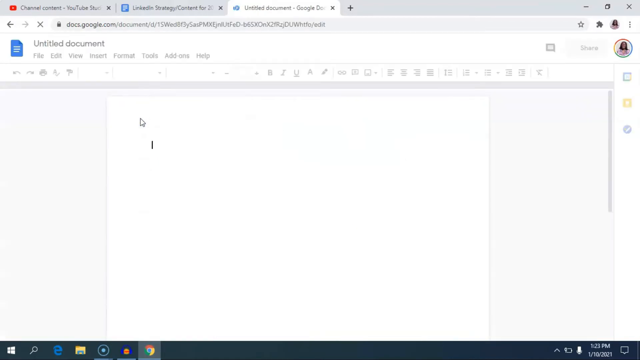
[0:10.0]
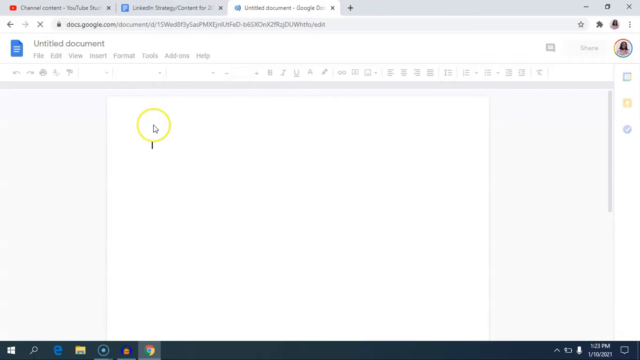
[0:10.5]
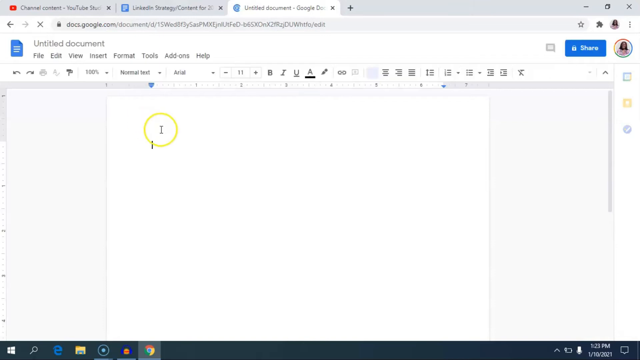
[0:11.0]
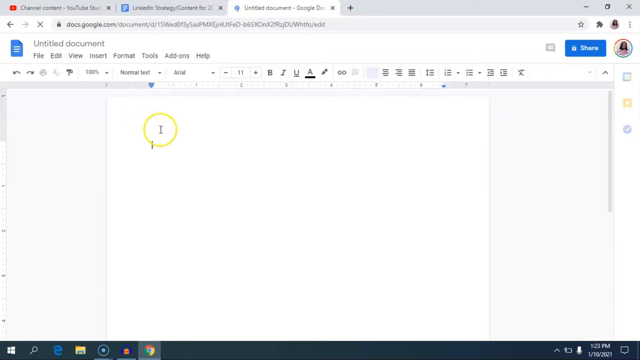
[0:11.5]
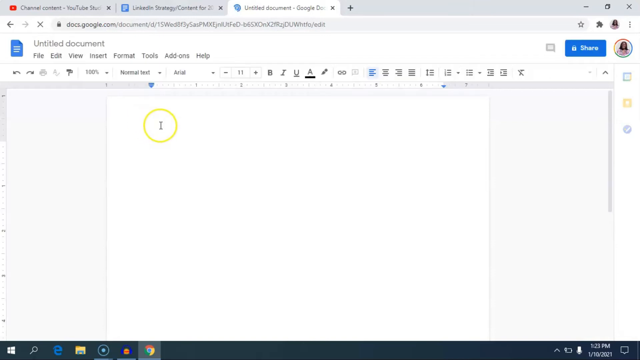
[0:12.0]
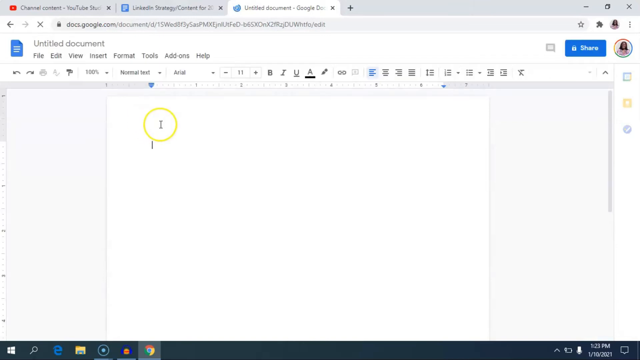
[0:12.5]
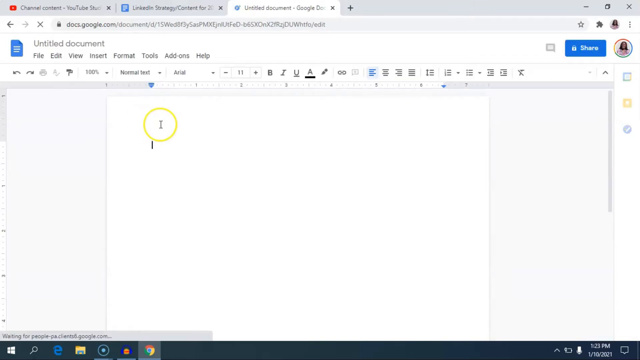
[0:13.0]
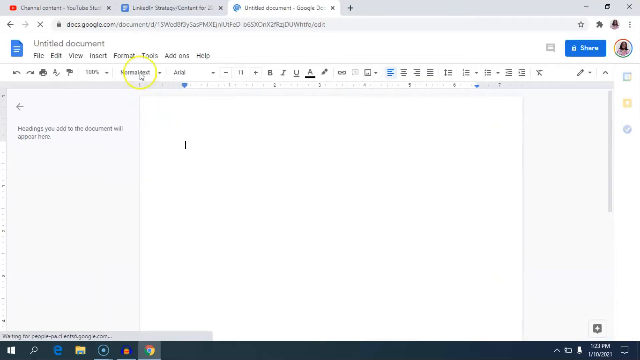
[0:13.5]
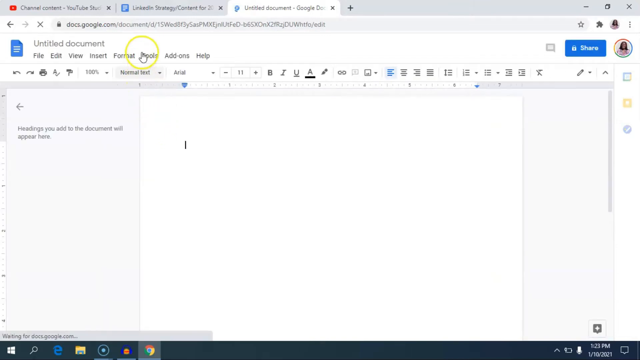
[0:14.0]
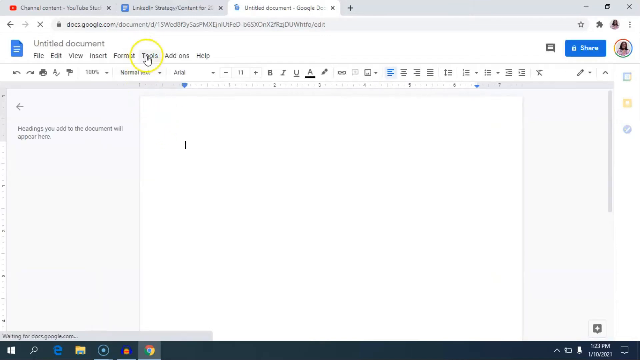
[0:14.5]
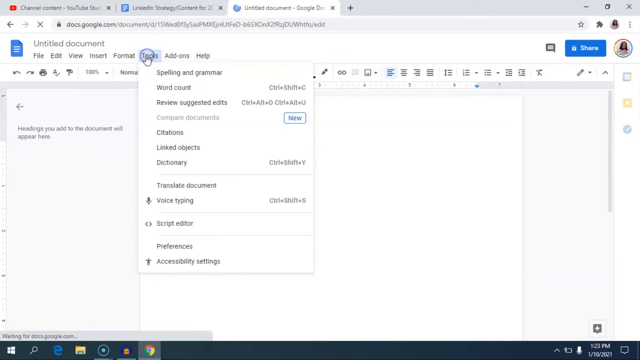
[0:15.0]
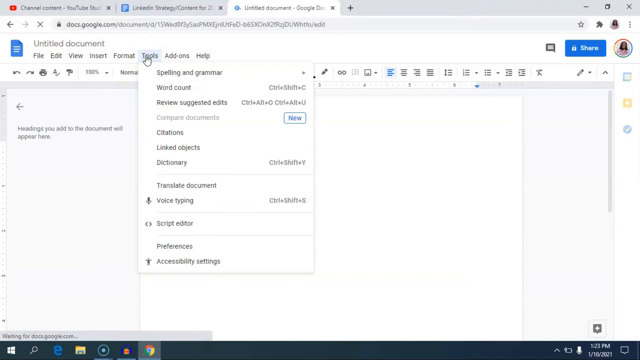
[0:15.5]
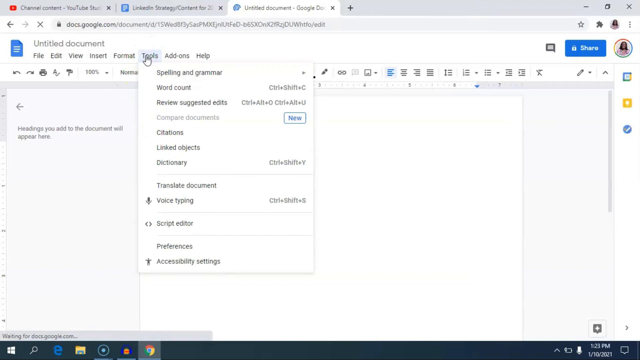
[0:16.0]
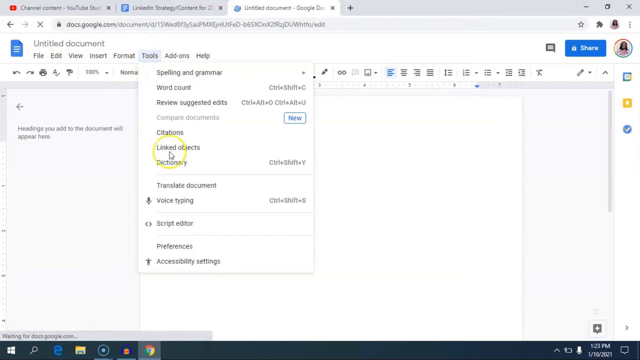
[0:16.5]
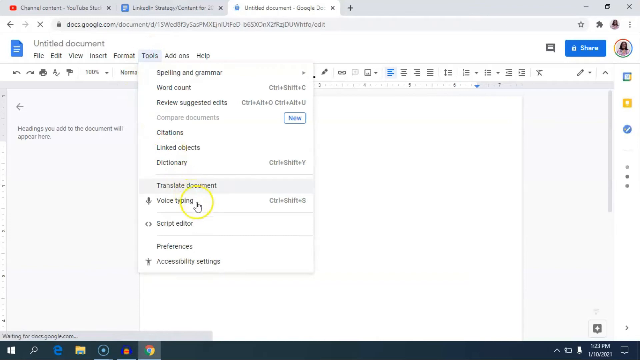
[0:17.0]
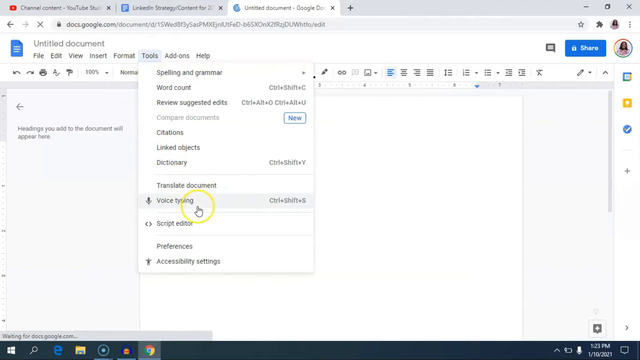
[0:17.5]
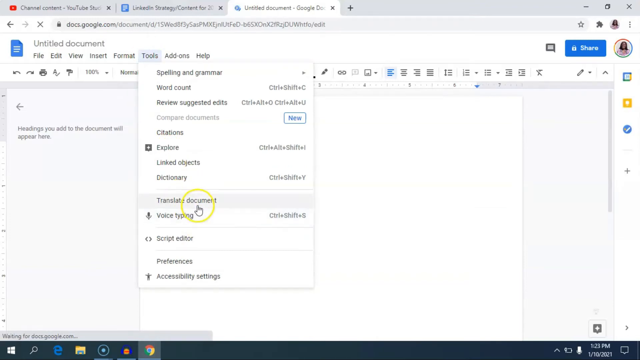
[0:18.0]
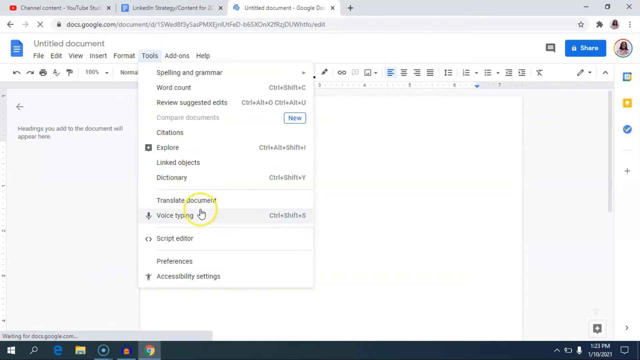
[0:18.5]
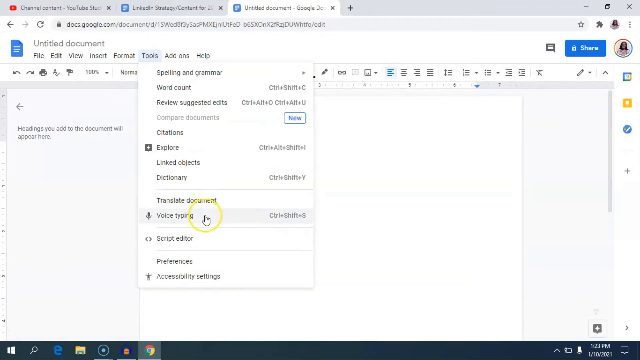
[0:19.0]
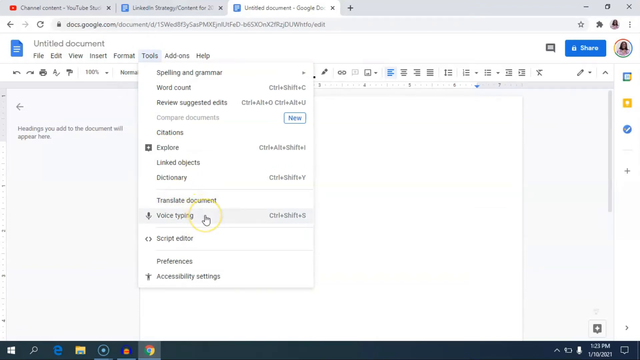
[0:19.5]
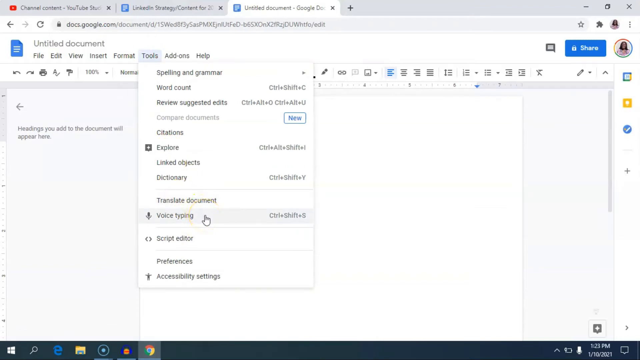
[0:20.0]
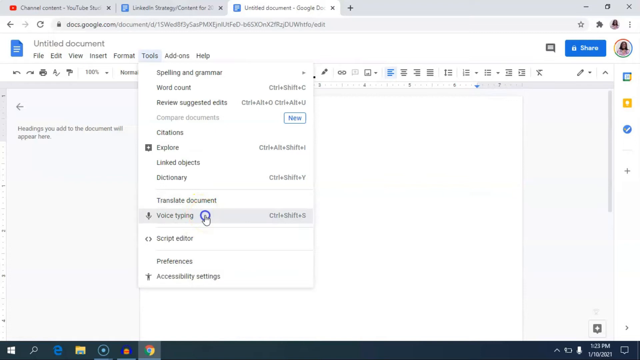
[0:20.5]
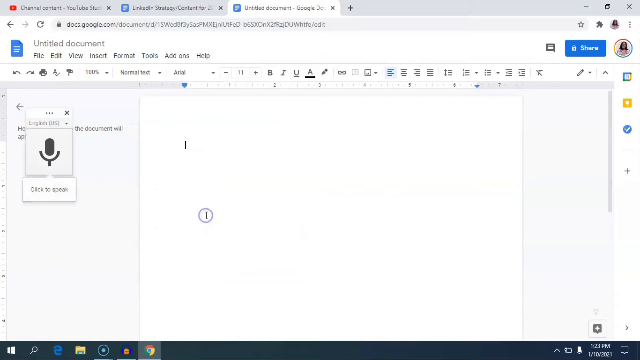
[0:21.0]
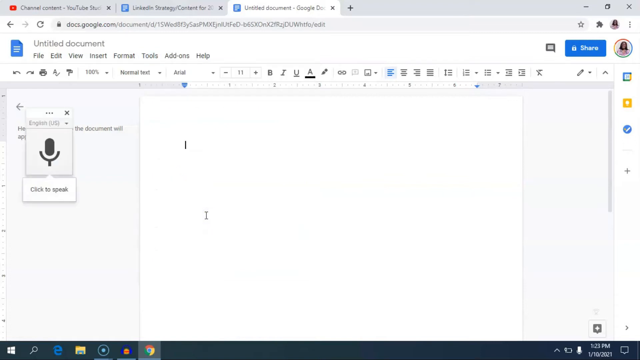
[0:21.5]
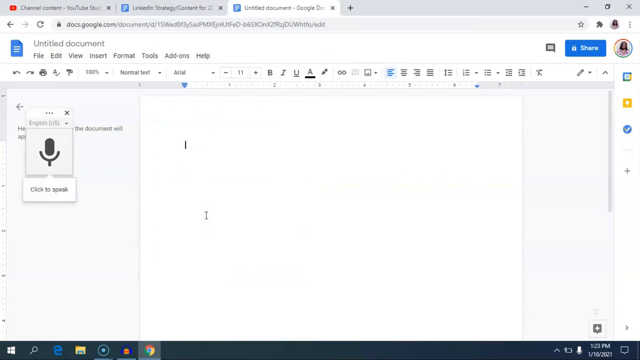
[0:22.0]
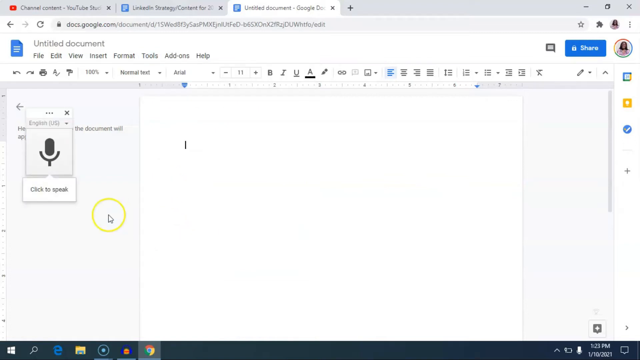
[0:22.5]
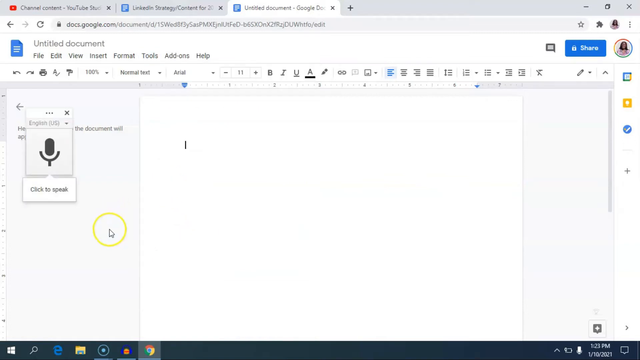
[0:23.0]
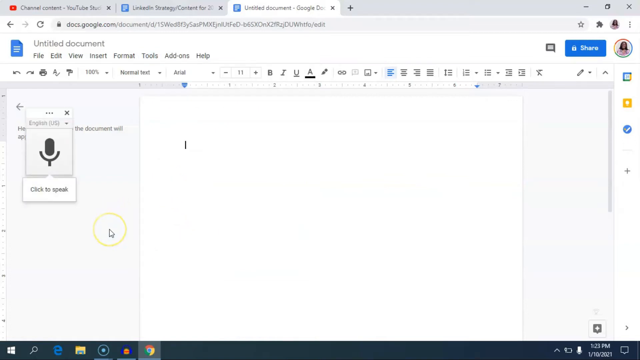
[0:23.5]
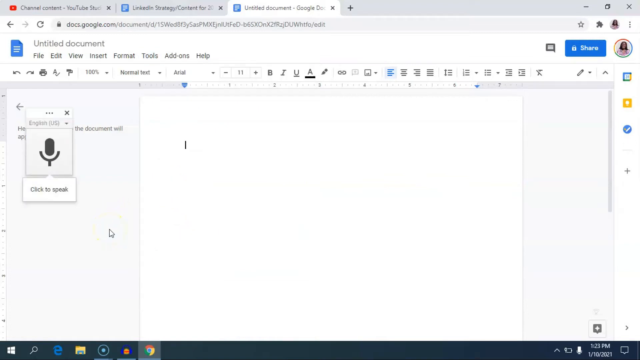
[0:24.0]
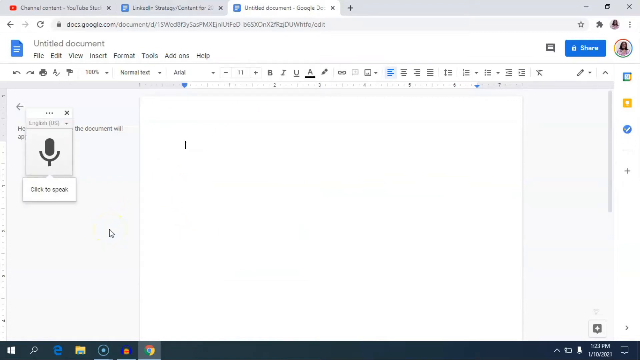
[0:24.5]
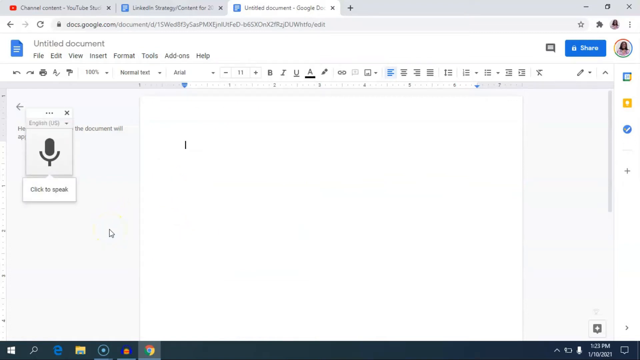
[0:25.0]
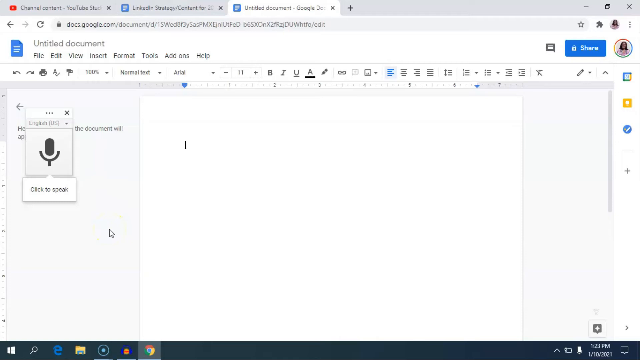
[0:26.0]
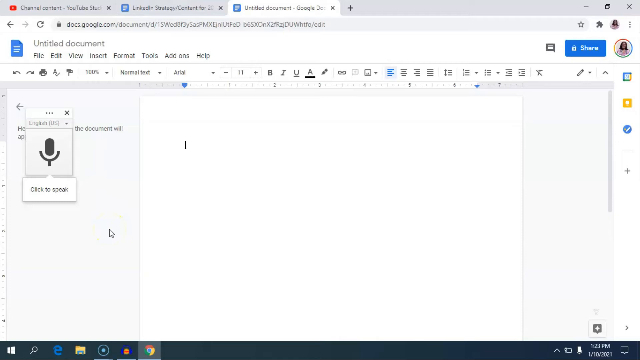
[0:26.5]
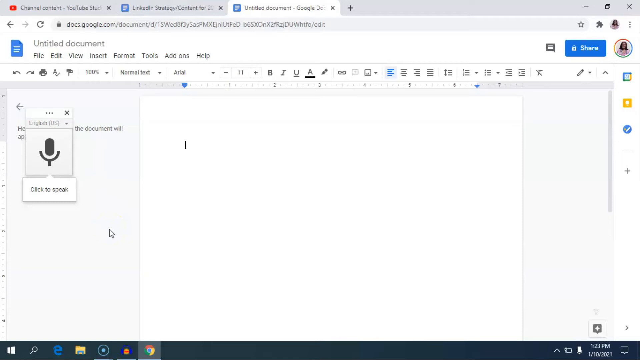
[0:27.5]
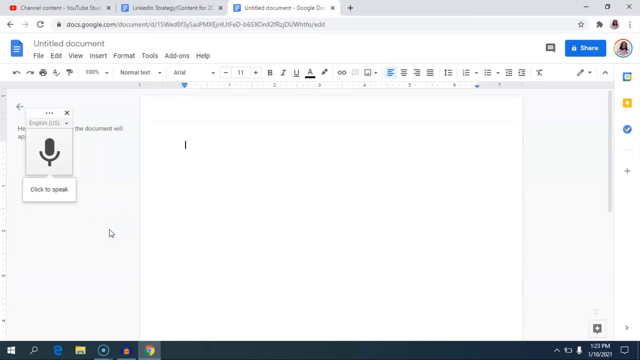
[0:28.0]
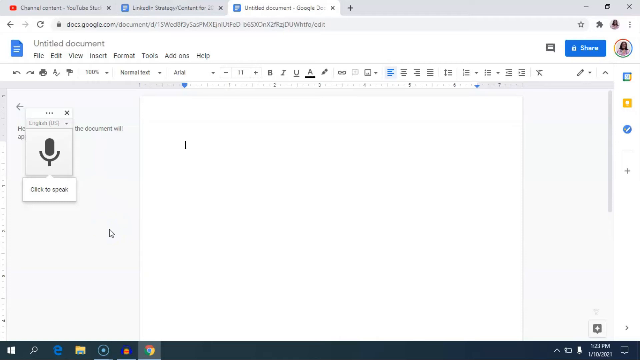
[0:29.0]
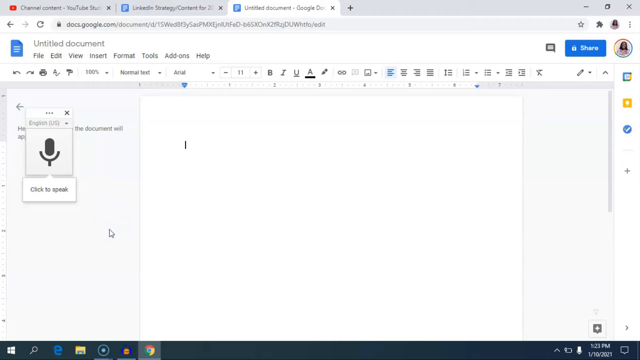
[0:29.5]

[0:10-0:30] The same Google Doc tabs are still open at the top. The person has clicked the blank option at the top of the options on the Google Docs page, opening a blank document page with "Untitled document" at the top left and nothing typed in. The mouse cursor has a yellow highlighted halo around it. The cursor goes to the Tools tab at the top and clicks Voice Typing from the drop-down menu. A grey and black microphone icon then appears on the left, with a drop-down bar that says "English U.S.", apparently to be used for speaking text into the document.